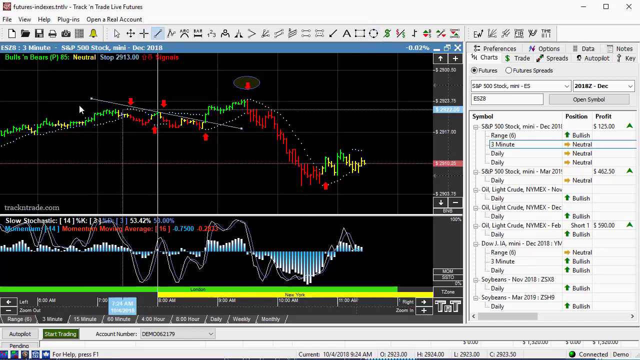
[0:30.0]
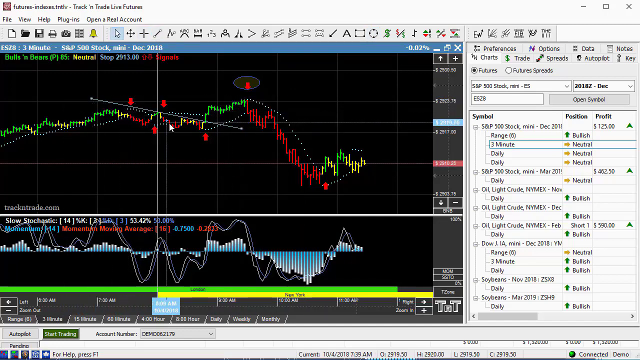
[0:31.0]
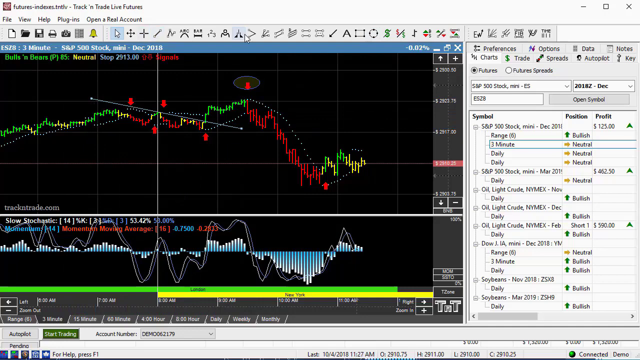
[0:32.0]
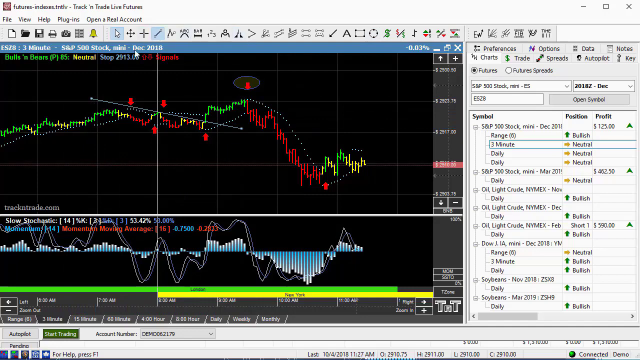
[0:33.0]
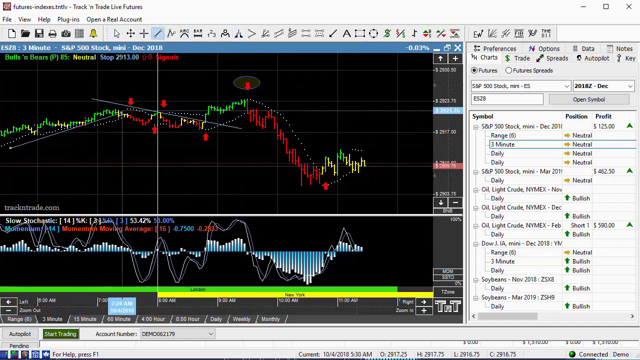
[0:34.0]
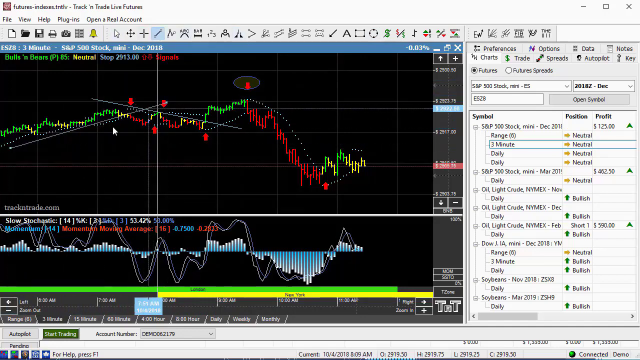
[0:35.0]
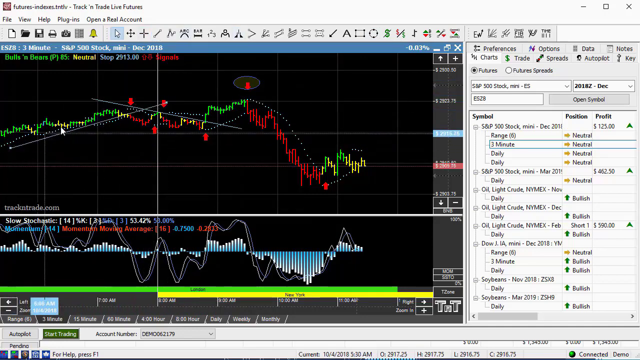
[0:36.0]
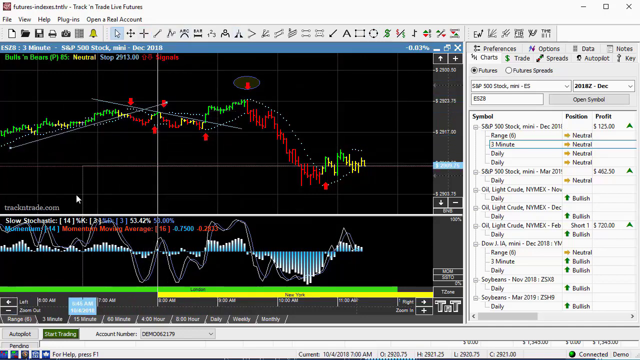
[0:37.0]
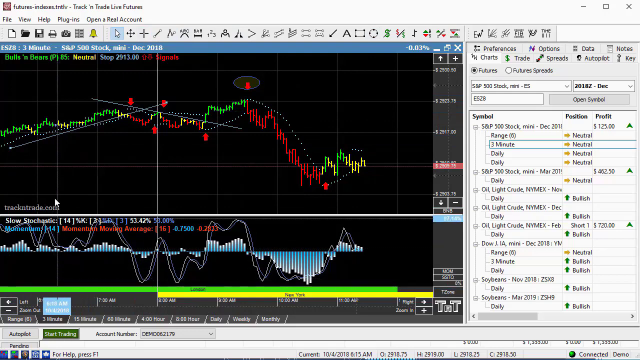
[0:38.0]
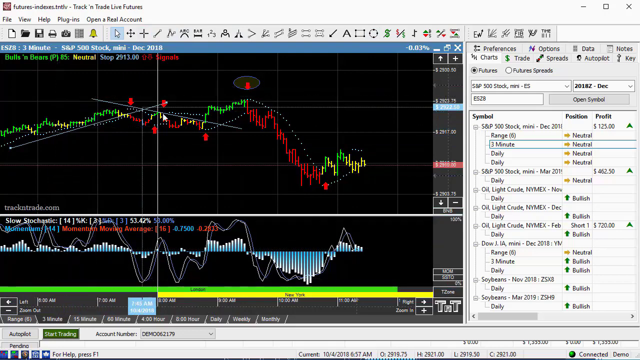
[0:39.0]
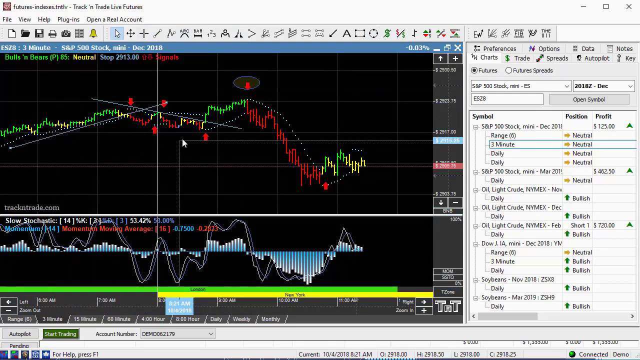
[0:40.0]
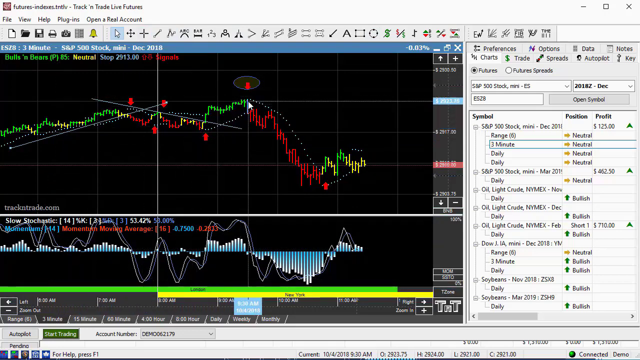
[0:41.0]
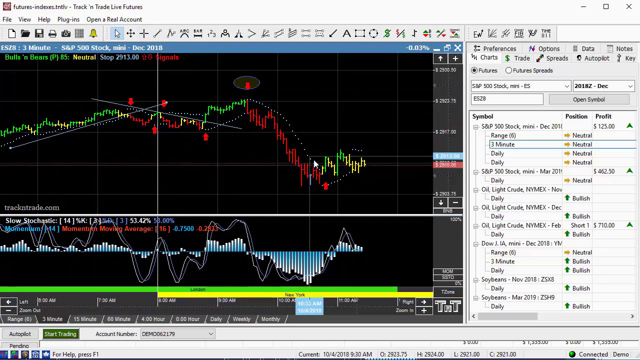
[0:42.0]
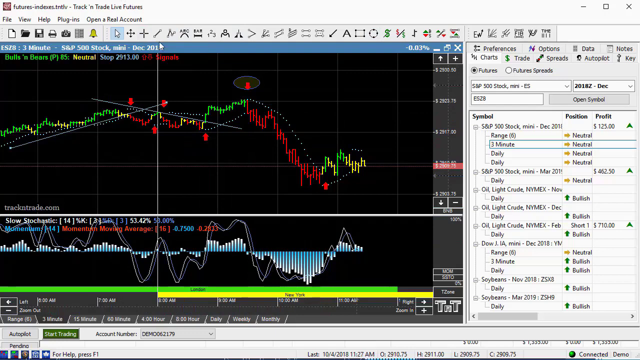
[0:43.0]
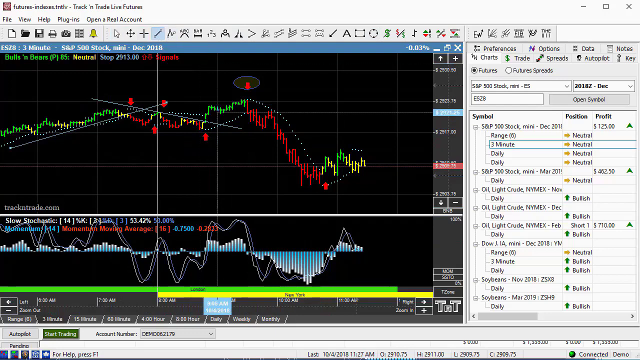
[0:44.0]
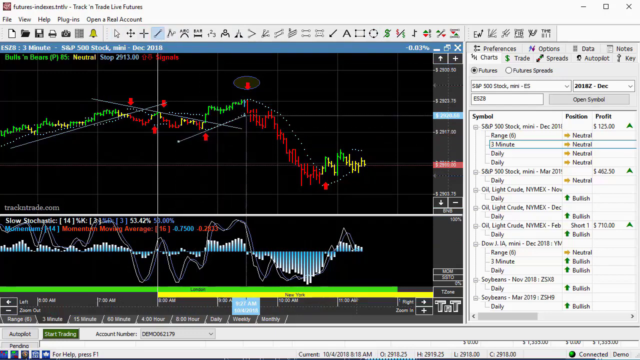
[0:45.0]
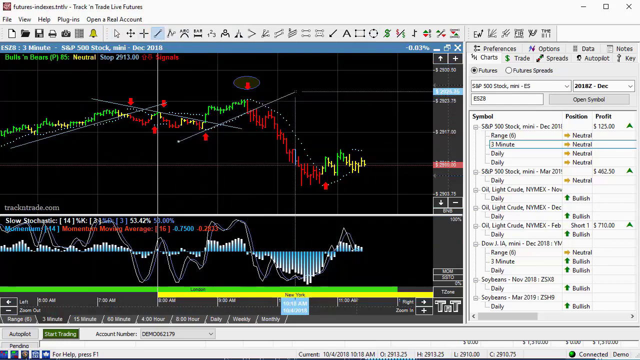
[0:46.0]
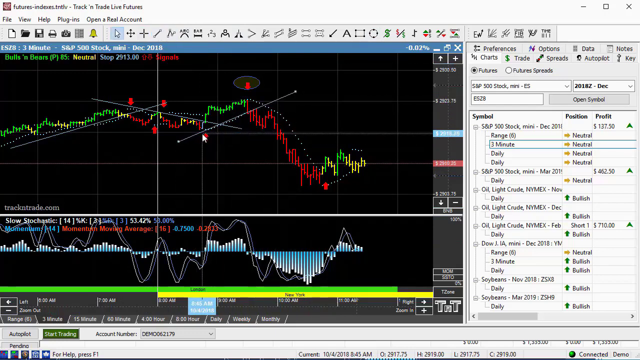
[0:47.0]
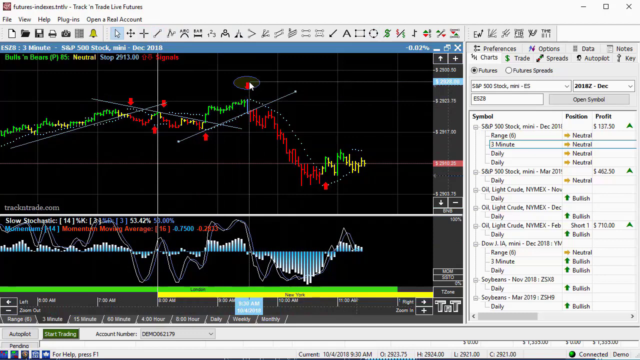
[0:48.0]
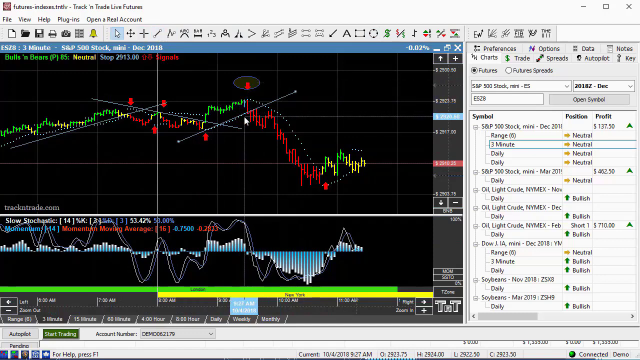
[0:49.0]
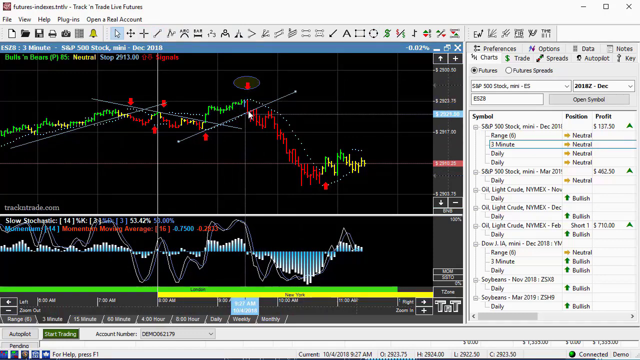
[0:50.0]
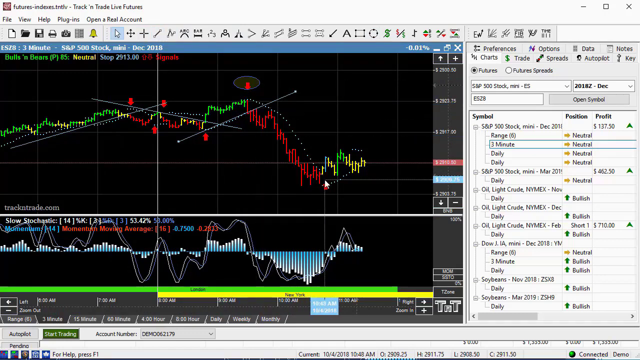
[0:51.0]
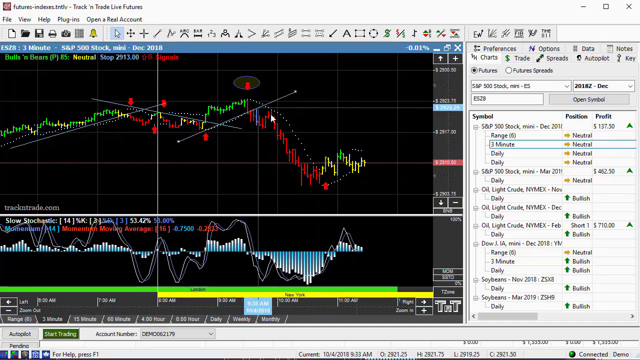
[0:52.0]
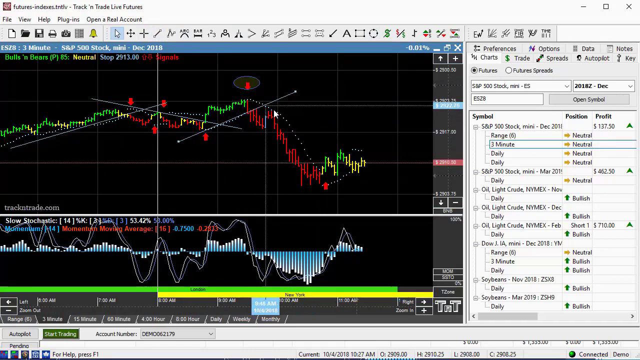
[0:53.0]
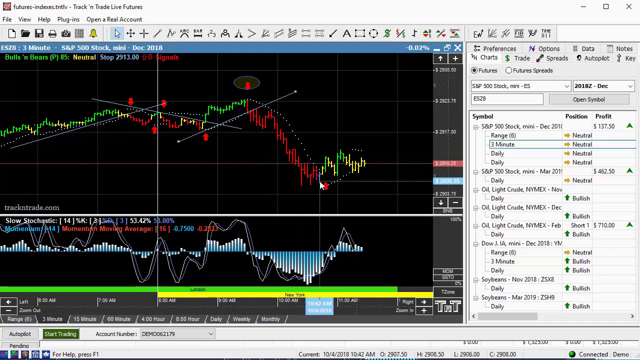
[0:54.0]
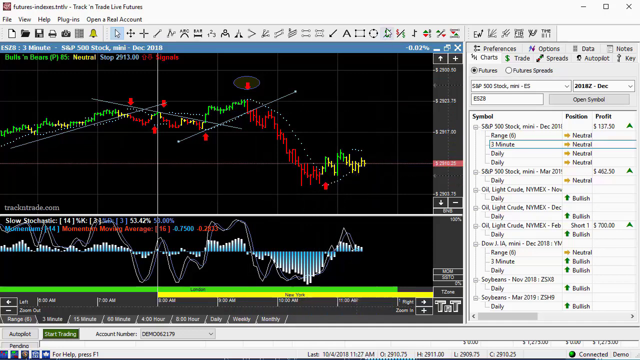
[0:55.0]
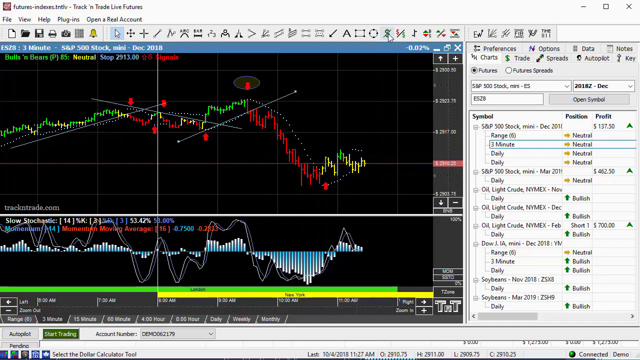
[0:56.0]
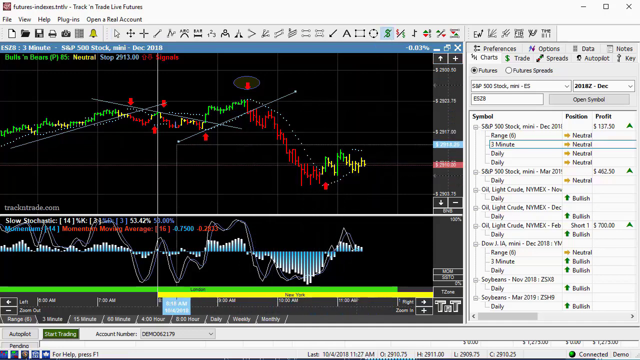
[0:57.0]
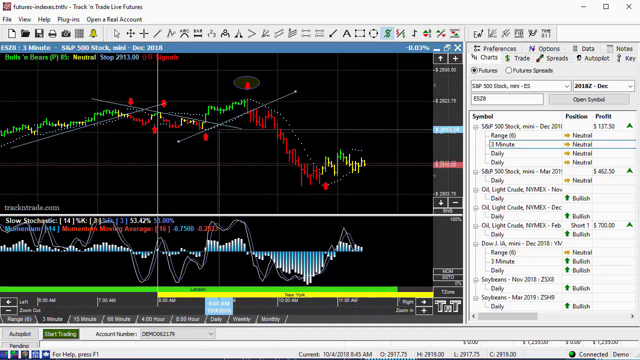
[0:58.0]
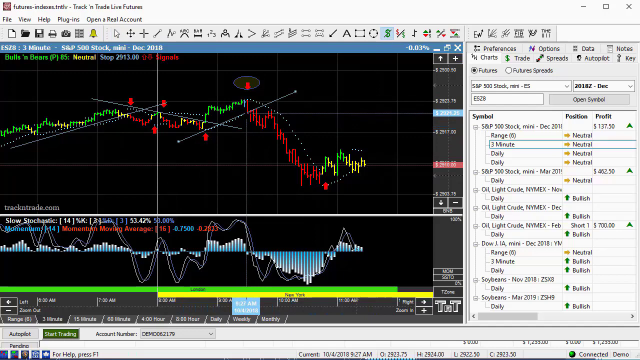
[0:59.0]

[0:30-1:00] A graphical representation of possibly a data set shows curves and bars in light blue, red, and green. One graph is above the horizontal axis and the other lies below it. At the top of the graph are the words "3-minute S&P 500 stock, December 2018", and many numbers and percentages appear in the graphs on both sides of the axis. Along the top are menu options such as File, View, Help, Plugins, and Open a Real Account. Below them are icons including a paper icon, a save icon, a print icon, a camera, a bell probably for notifications, a folder, and what looks to be a scanner icon. To the right are icons representing different types of shapes. A cursor moves around the graph, clicking on different shapes and making adjustments, applying selected shapes such as a diagonal line onto the graphs.